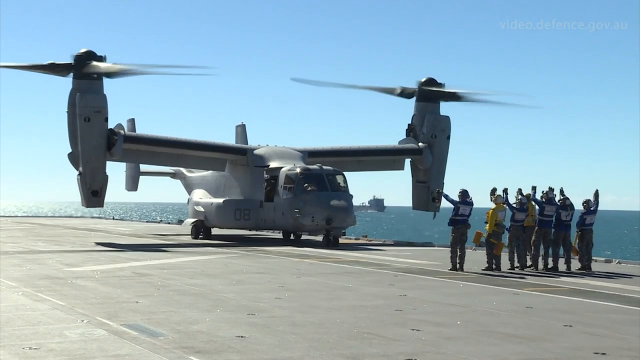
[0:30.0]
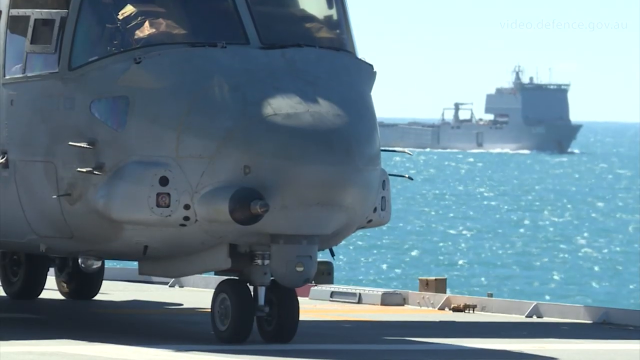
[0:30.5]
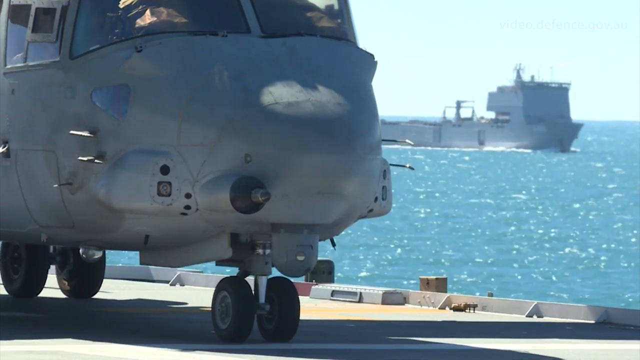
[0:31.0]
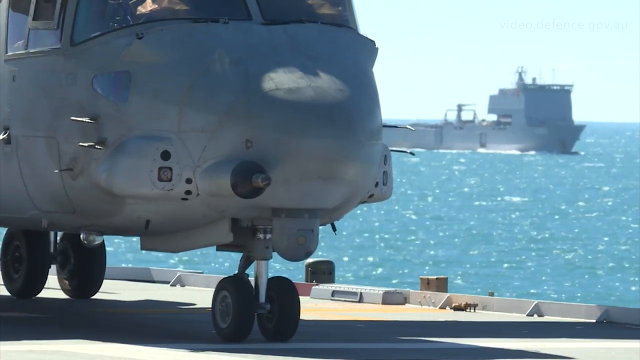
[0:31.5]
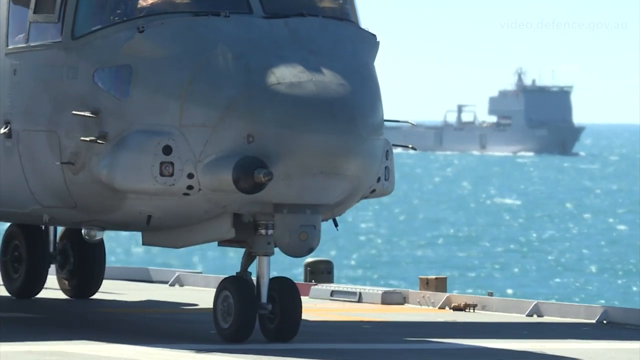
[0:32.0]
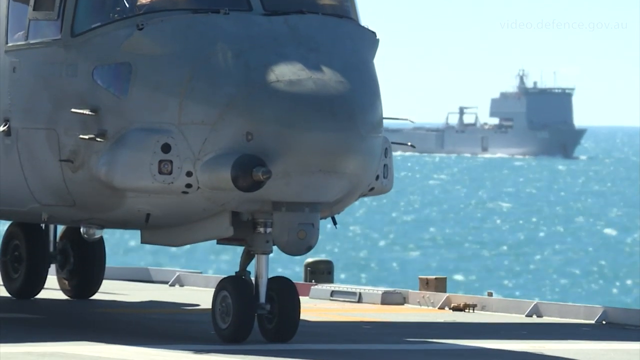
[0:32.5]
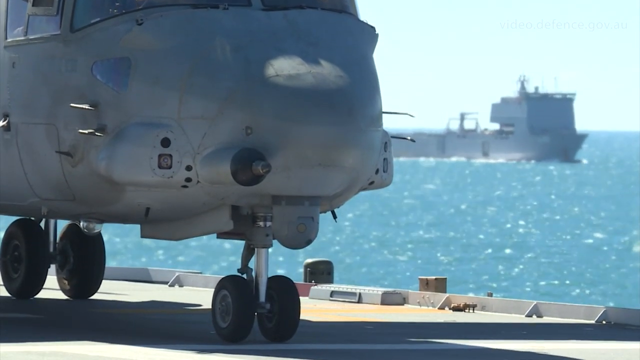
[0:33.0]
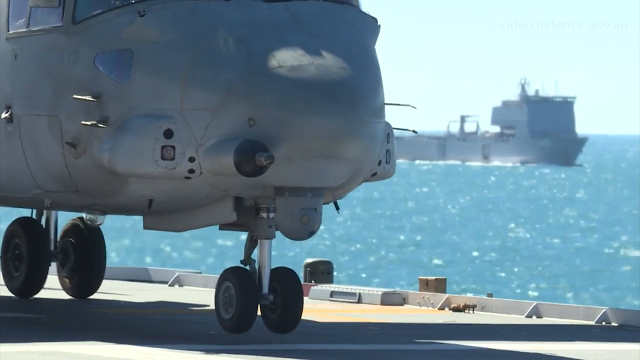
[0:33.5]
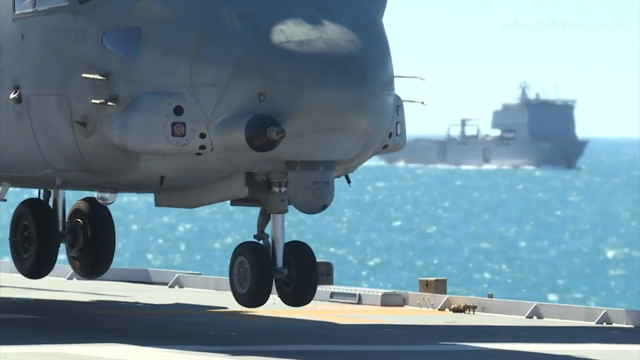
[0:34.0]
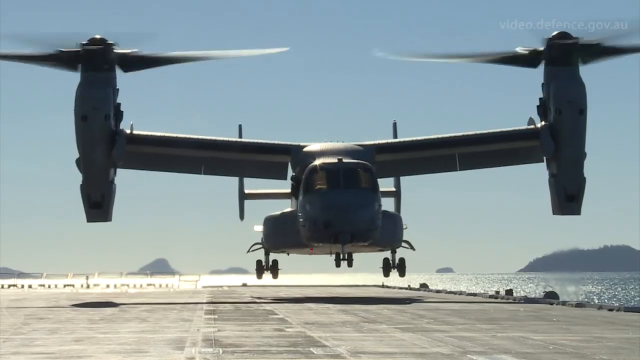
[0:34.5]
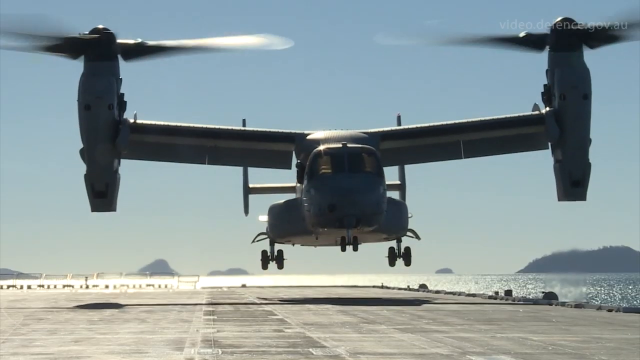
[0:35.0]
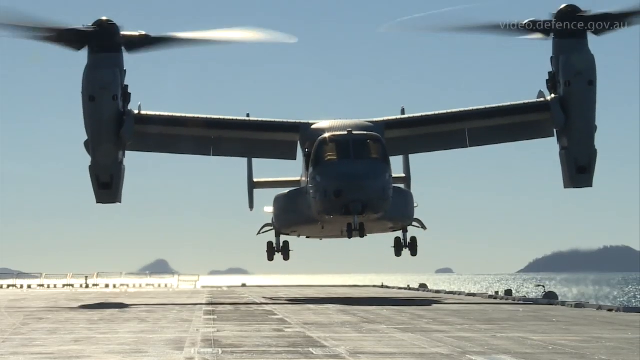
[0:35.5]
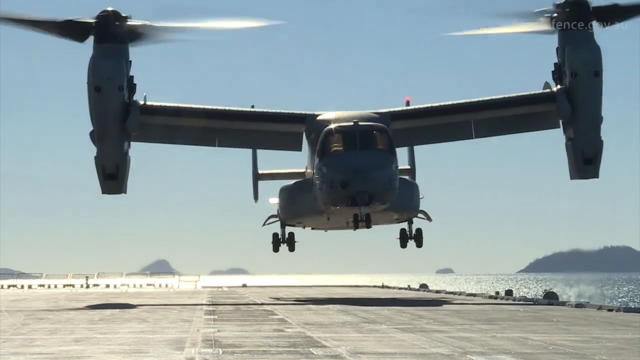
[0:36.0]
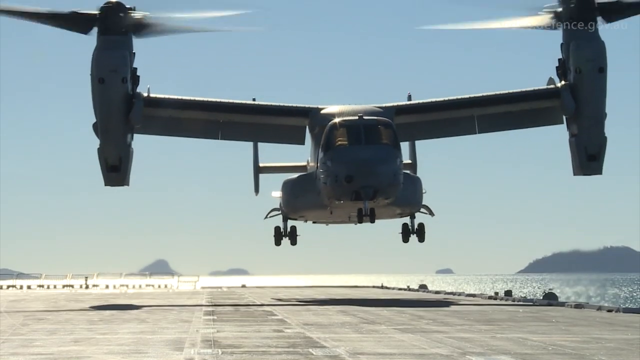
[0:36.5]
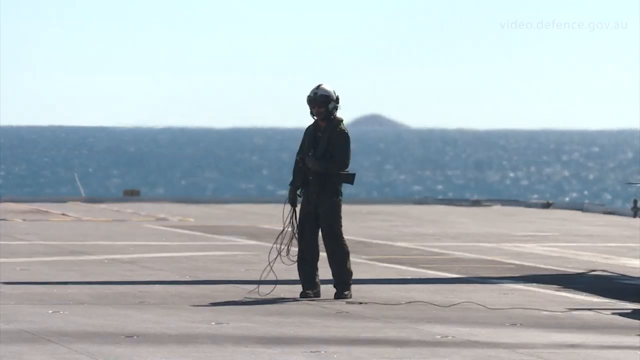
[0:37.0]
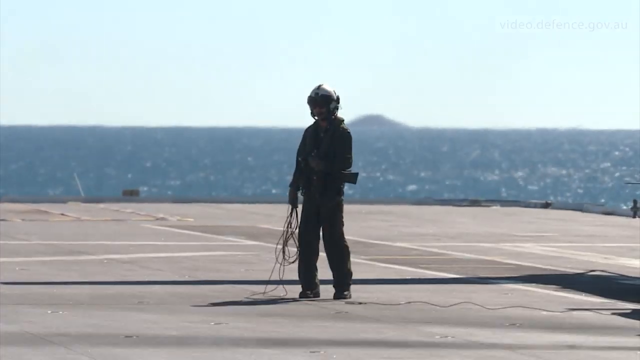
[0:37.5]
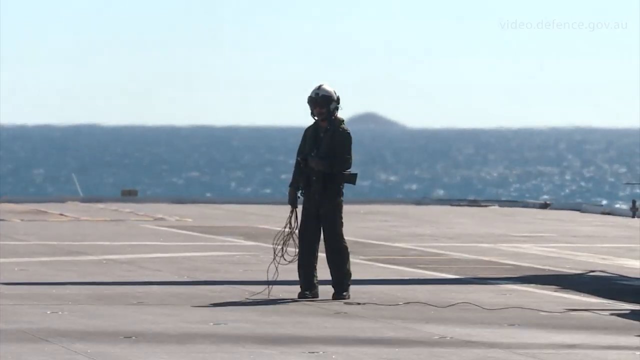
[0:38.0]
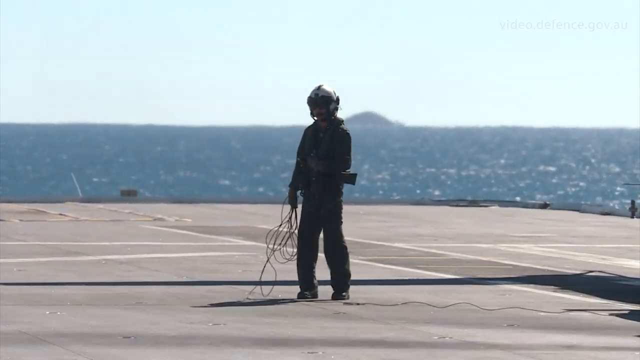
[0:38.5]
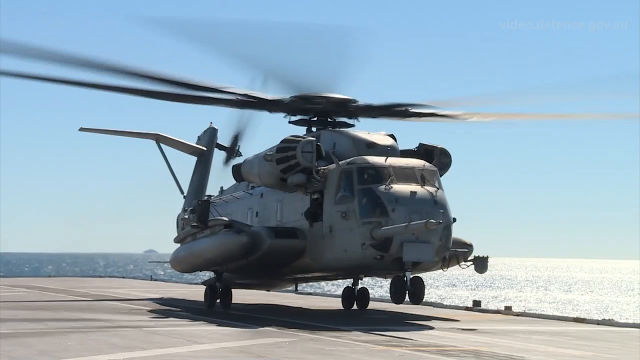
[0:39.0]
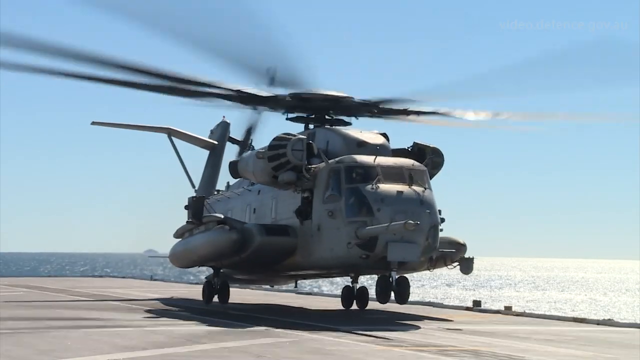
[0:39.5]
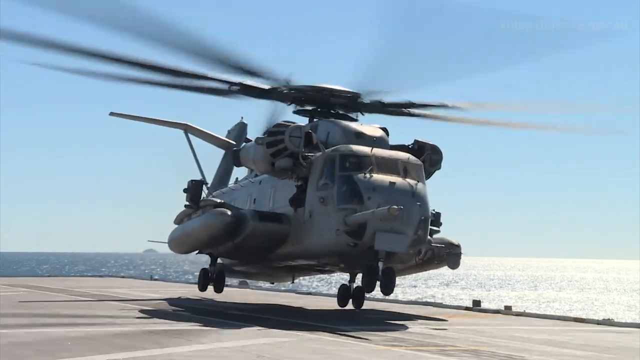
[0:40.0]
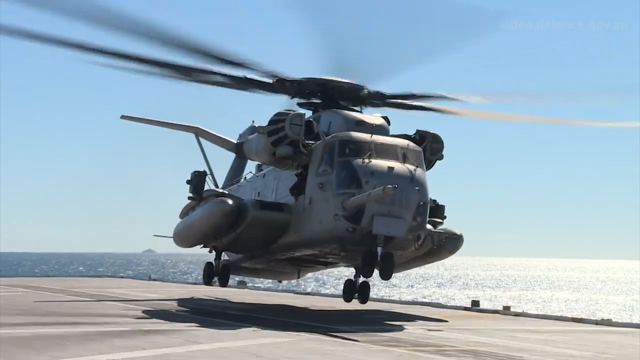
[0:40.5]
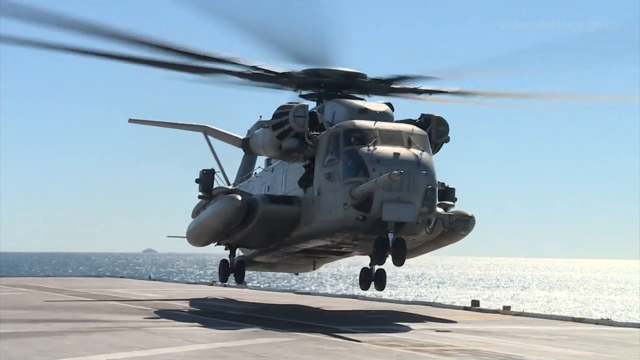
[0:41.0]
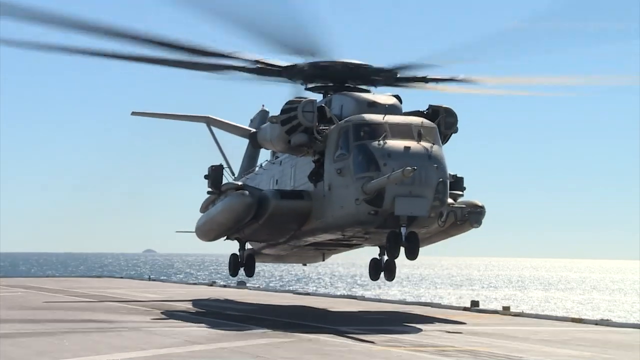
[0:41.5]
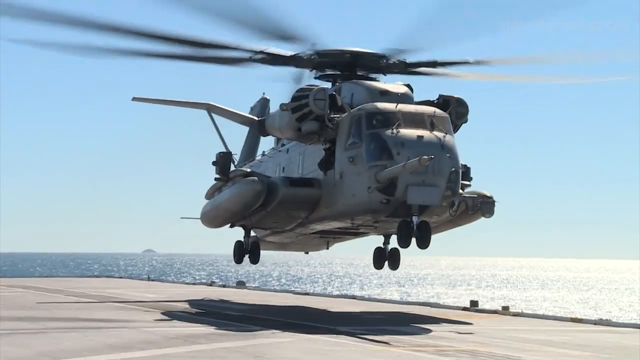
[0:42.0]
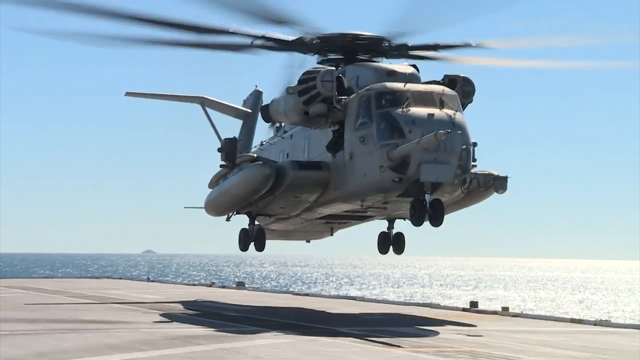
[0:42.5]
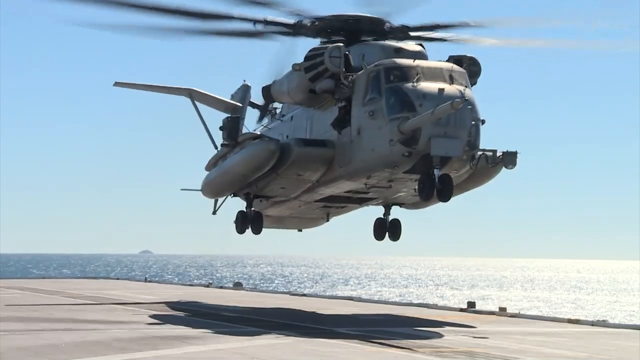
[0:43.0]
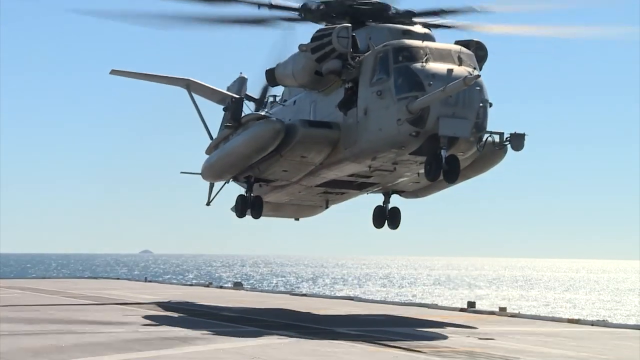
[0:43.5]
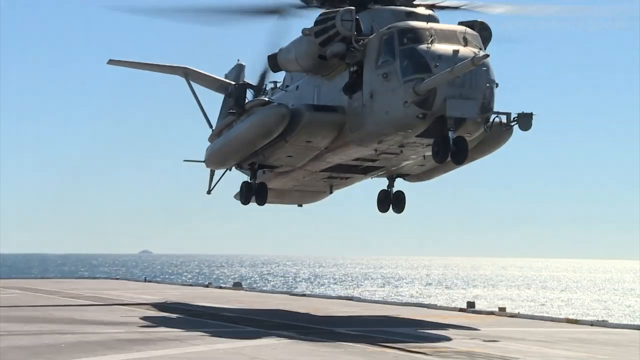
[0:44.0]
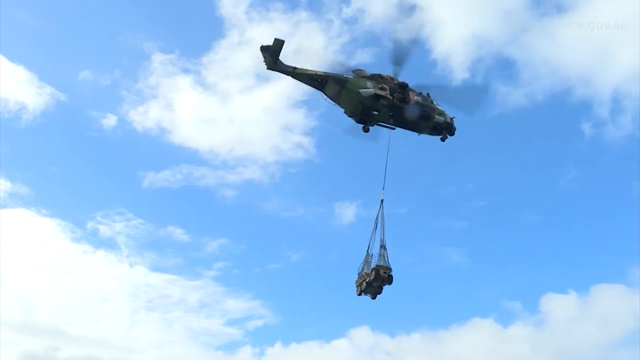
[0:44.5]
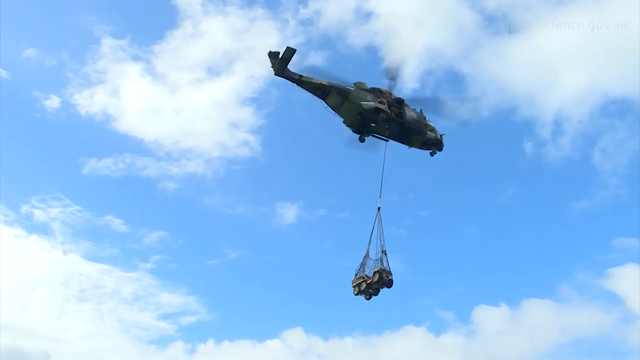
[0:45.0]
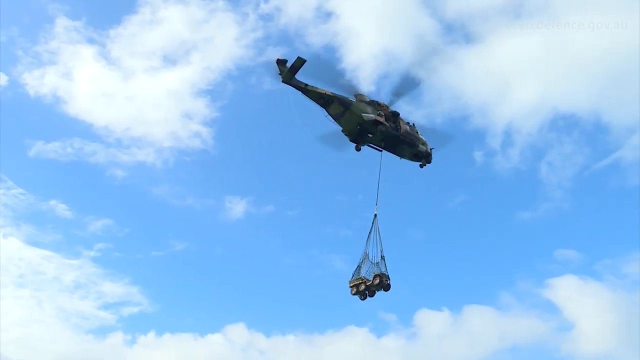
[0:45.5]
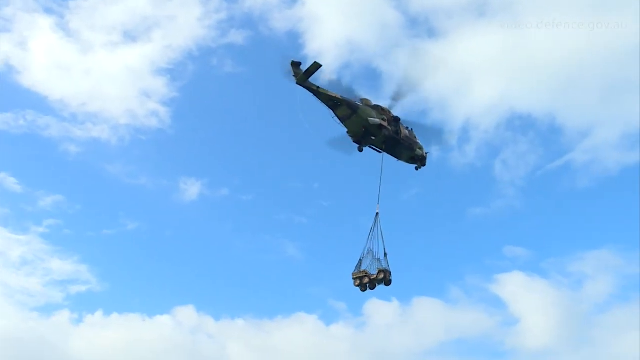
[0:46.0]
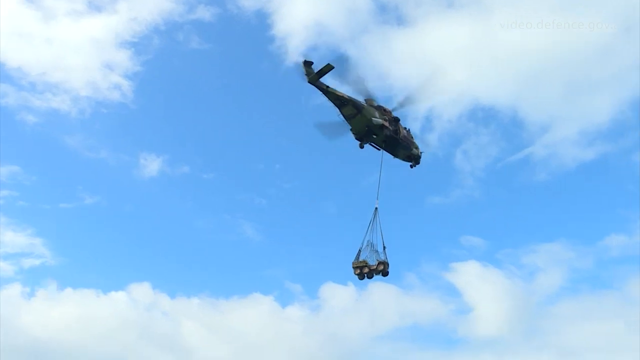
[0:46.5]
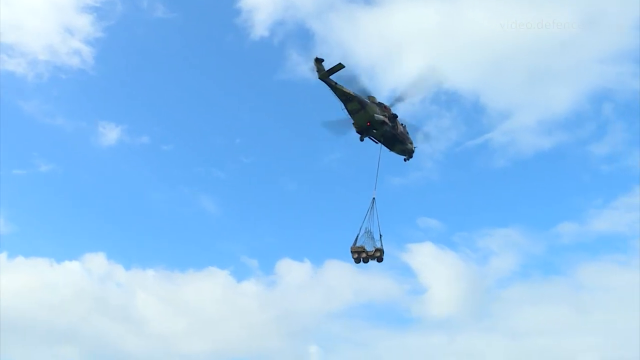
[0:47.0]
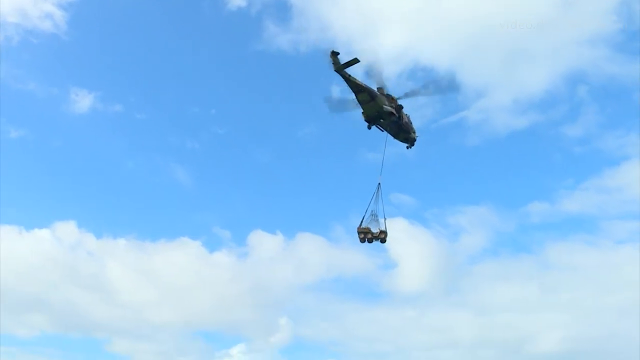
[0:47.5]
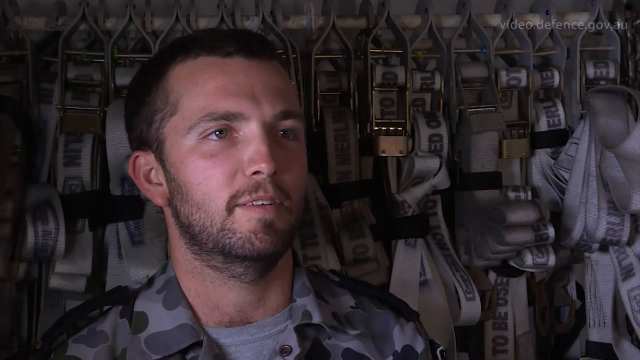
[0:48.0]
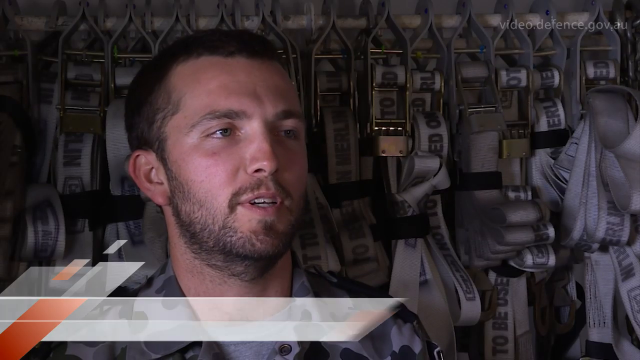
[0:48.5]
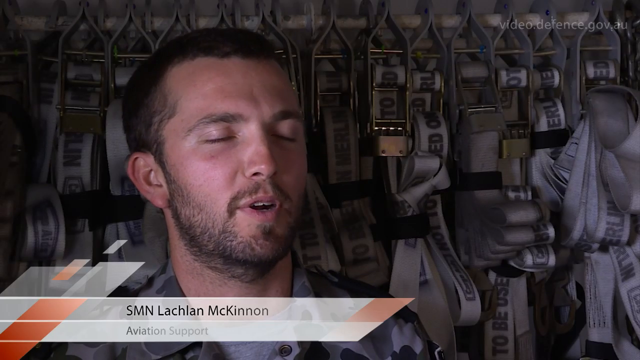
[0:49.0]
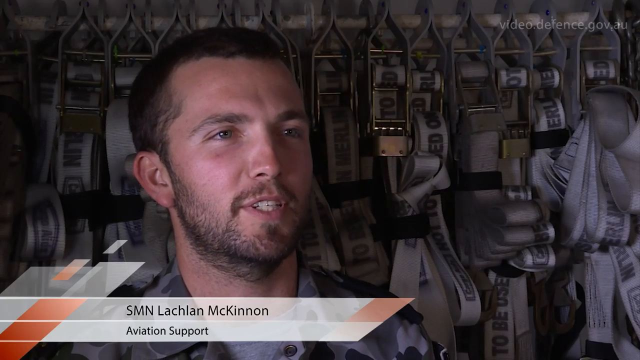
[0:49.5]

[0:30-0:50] A large, dark grey aircraft is above a white-grey deck. It has two big wings extending sideways, with two large motors spinning fast at the ends of the wings. The aircraft lifts into the air against a light blue sky, with the sea behind it shining in the sun. The video then changes to a smaller helicopter, also grey and heavy, with spinning blades on top, against a clear blue sky with sunlight on its wheels. The view changes again to a helicopter in the sky with people hanging on a rope underneath, being lifted. They look small and black against the bright sky. Both wear uniforms with things on their backs, numbers or writing in black on a white background, and their hands are lifted into the air.